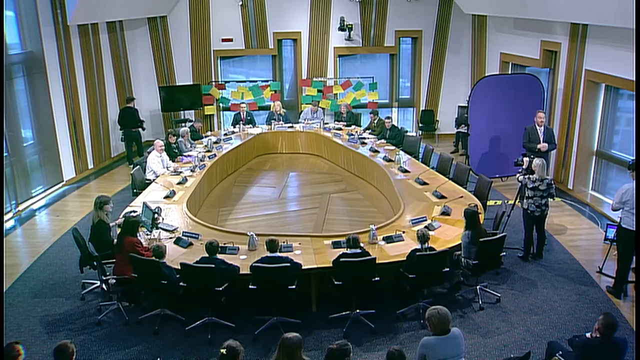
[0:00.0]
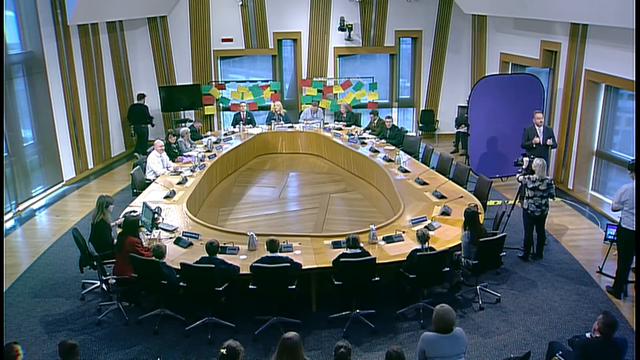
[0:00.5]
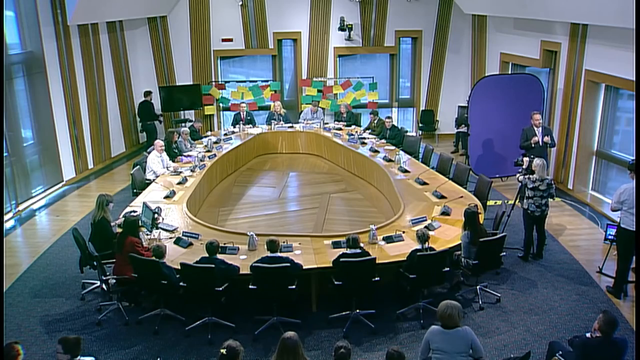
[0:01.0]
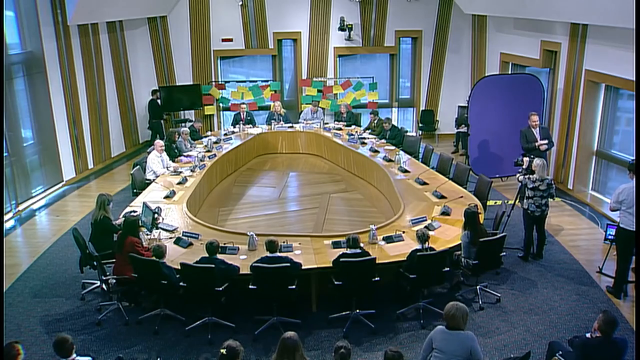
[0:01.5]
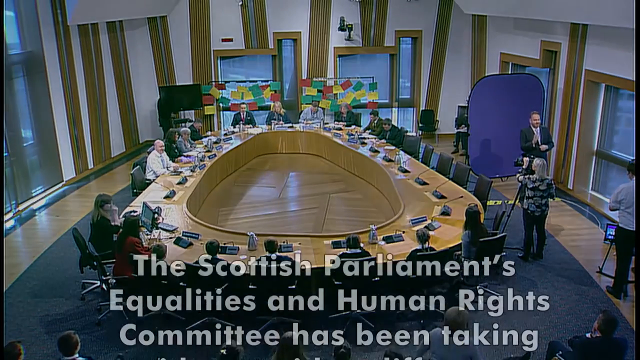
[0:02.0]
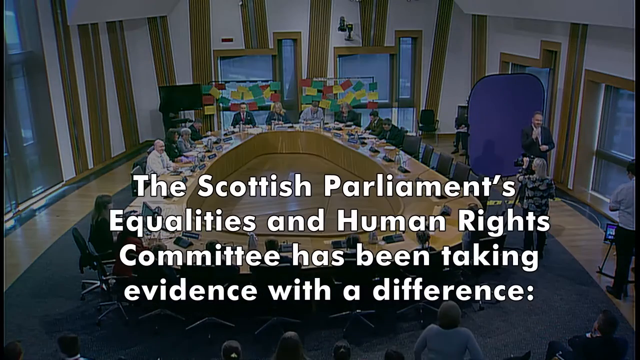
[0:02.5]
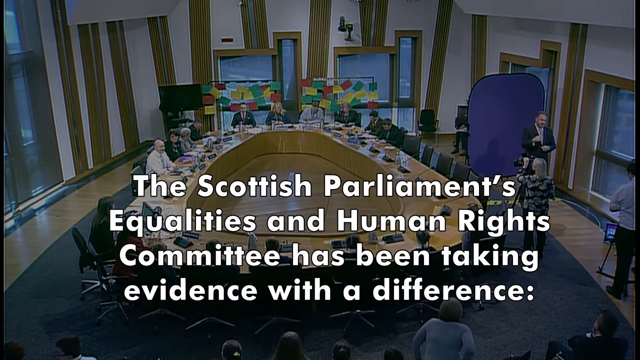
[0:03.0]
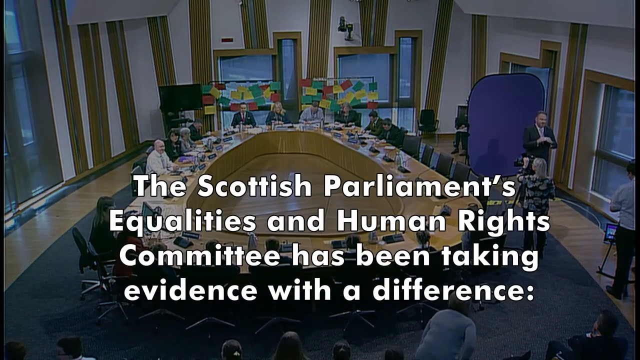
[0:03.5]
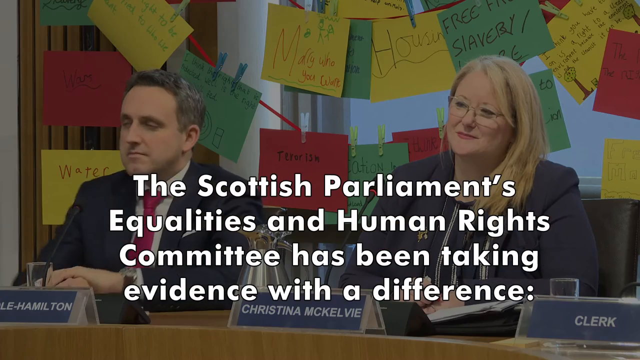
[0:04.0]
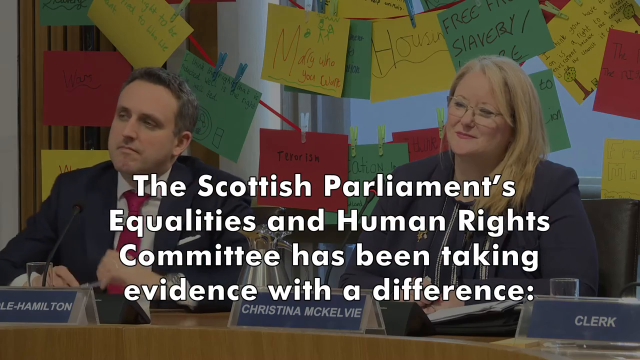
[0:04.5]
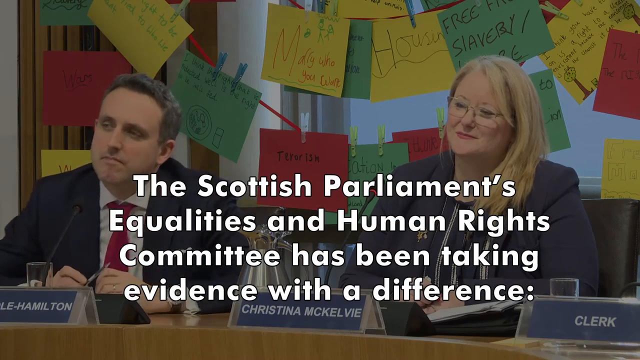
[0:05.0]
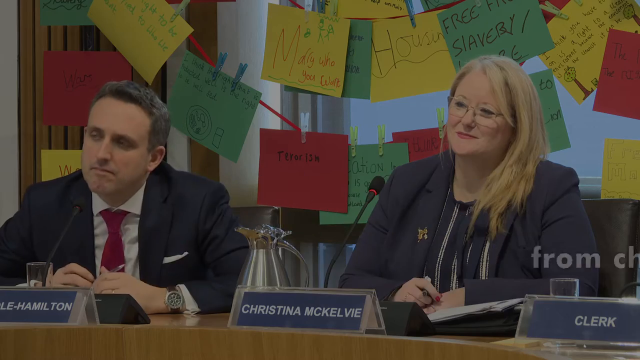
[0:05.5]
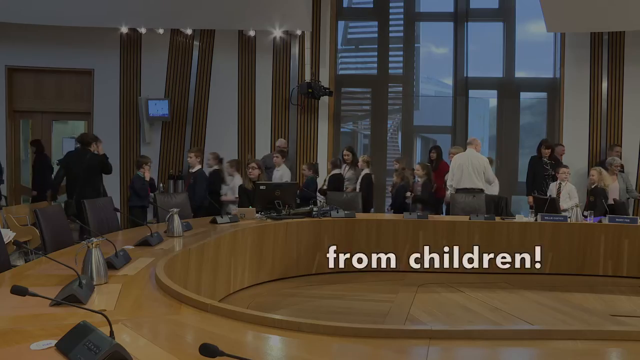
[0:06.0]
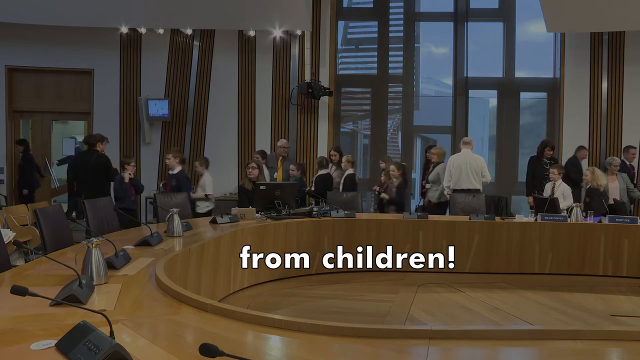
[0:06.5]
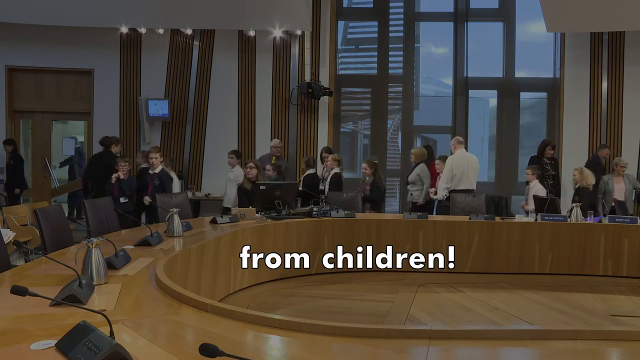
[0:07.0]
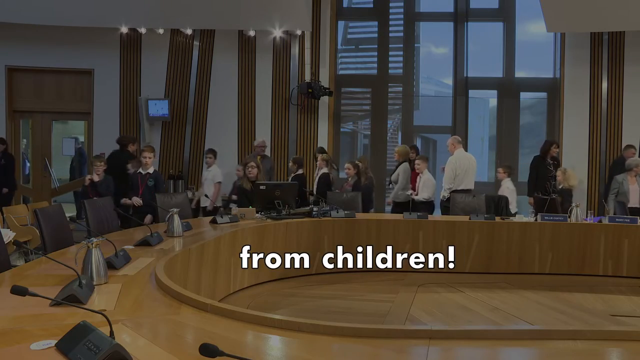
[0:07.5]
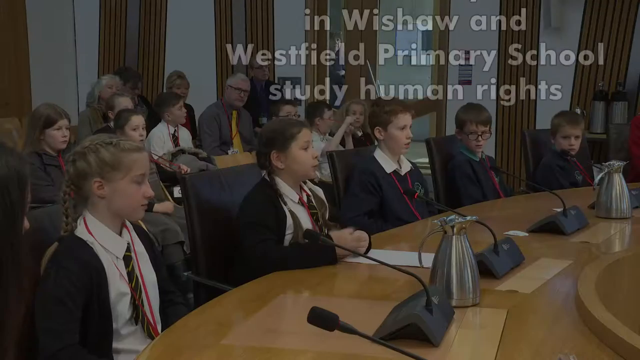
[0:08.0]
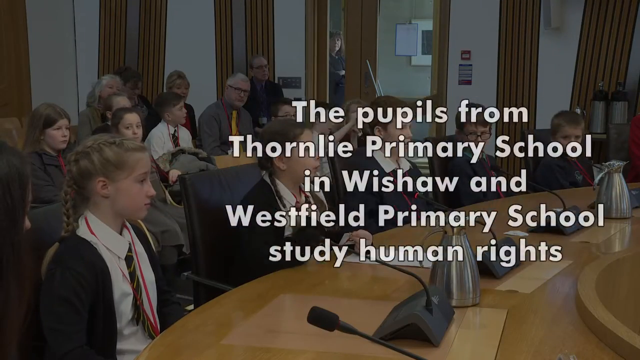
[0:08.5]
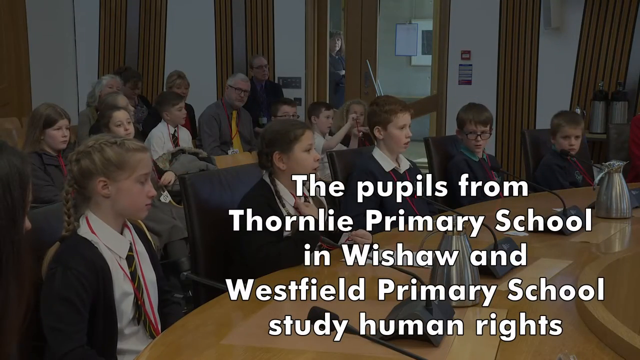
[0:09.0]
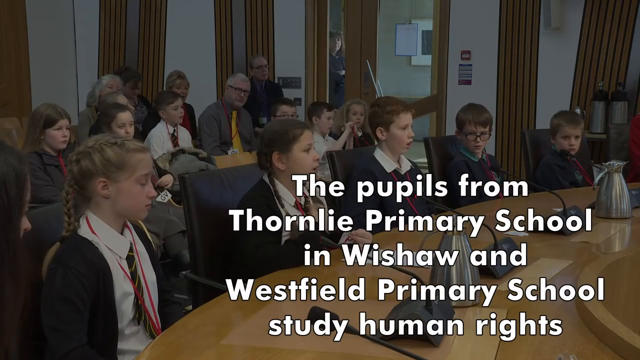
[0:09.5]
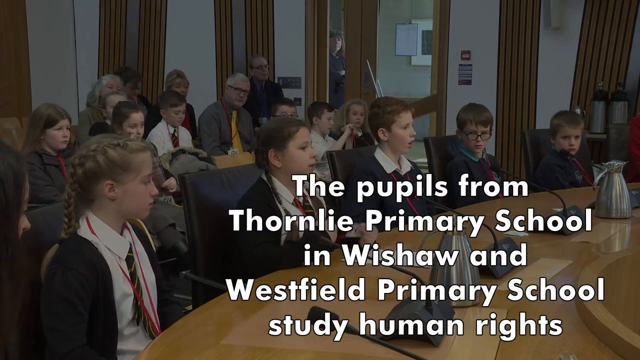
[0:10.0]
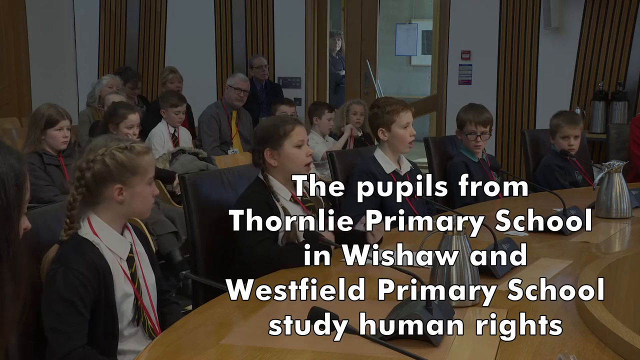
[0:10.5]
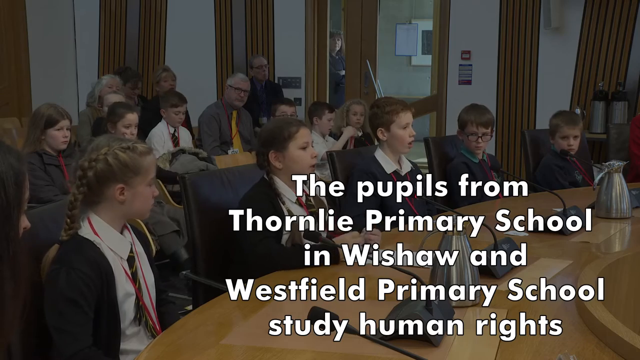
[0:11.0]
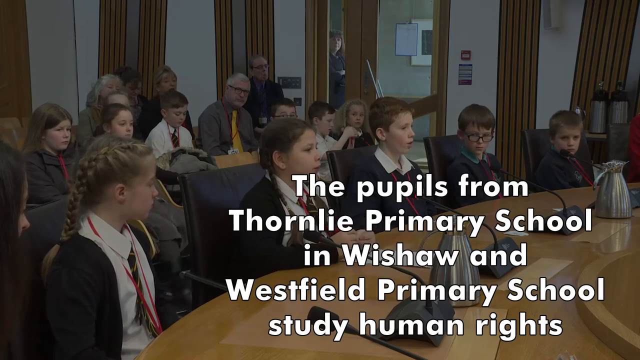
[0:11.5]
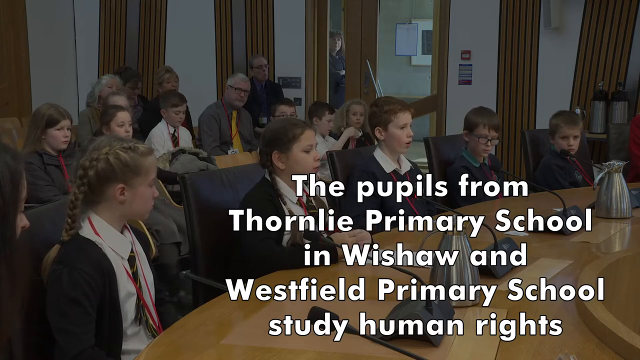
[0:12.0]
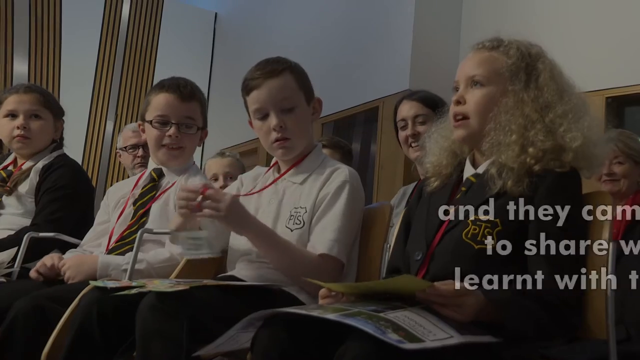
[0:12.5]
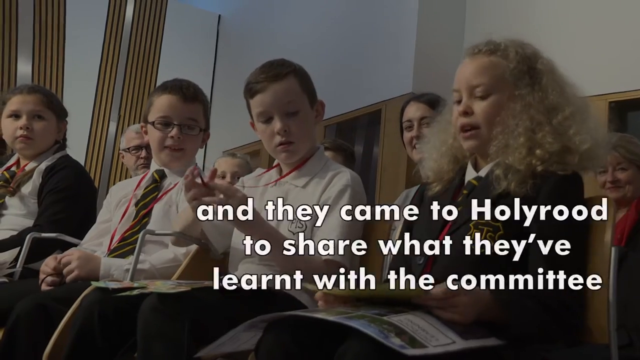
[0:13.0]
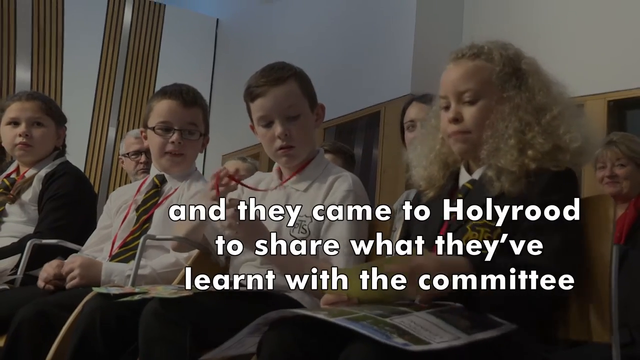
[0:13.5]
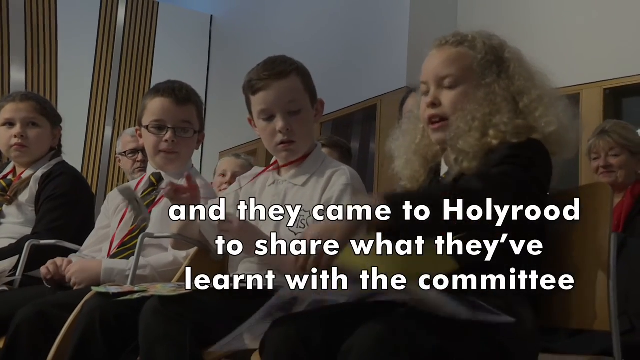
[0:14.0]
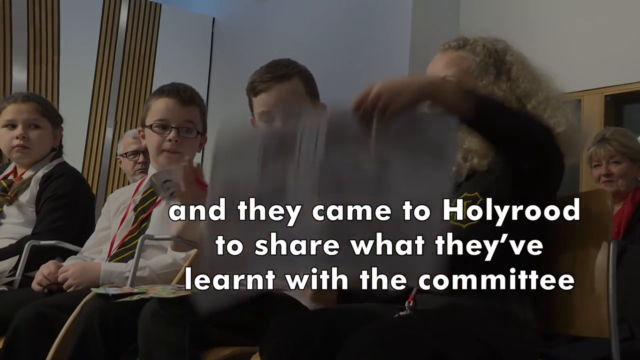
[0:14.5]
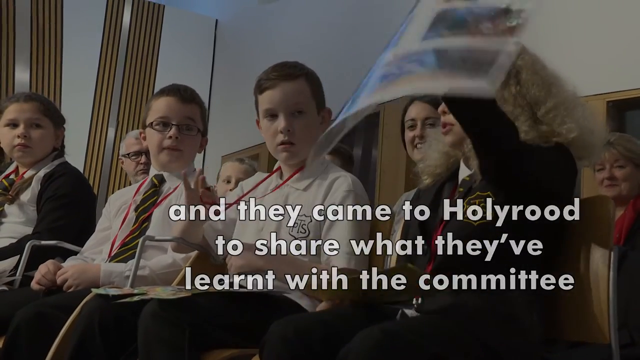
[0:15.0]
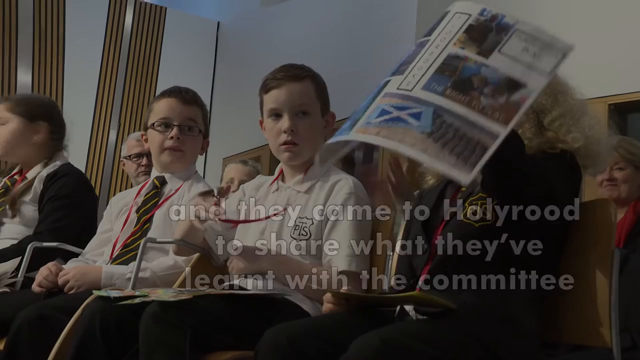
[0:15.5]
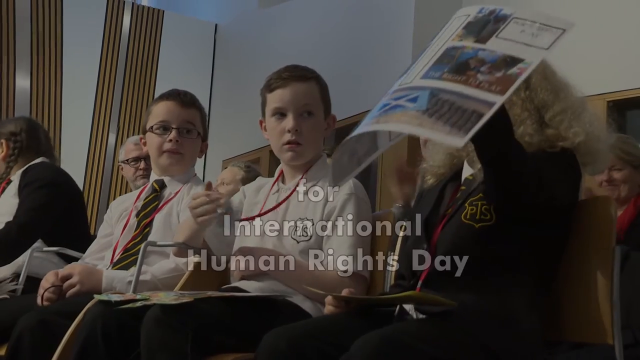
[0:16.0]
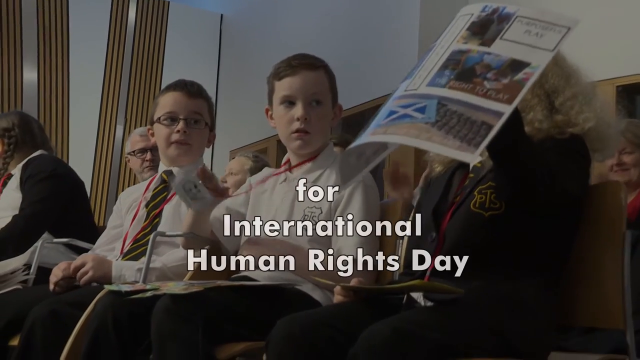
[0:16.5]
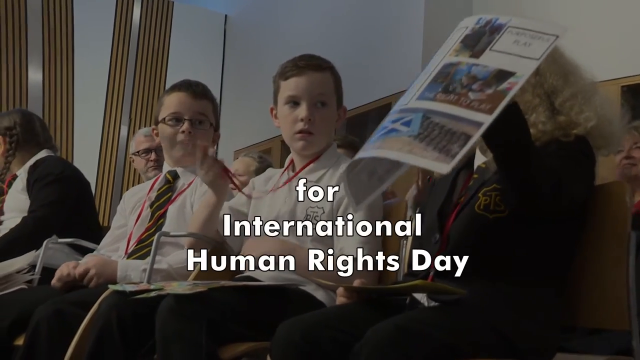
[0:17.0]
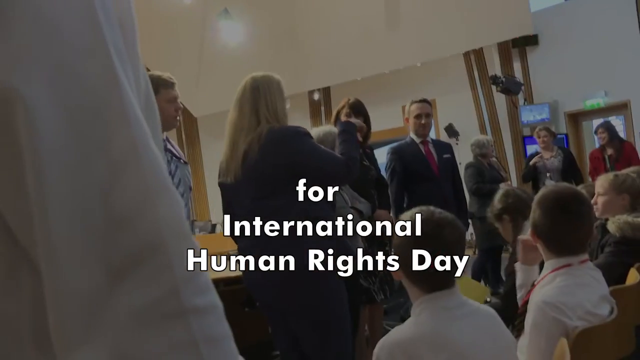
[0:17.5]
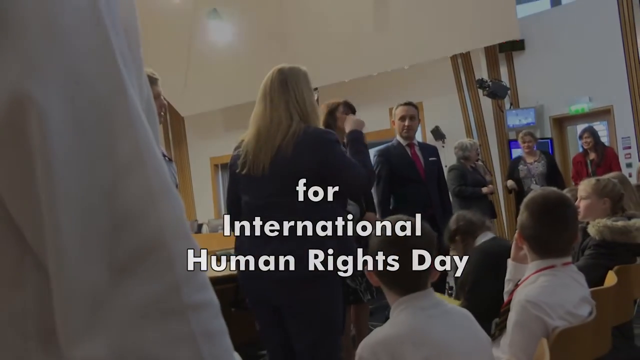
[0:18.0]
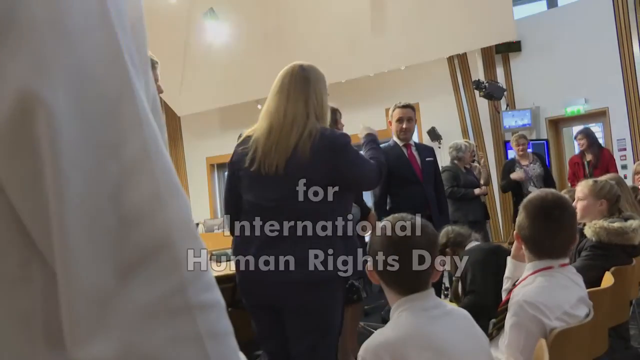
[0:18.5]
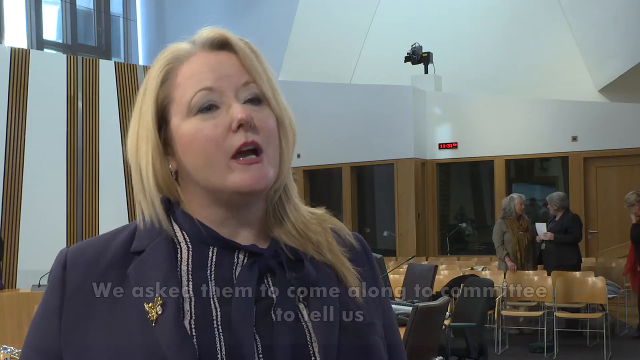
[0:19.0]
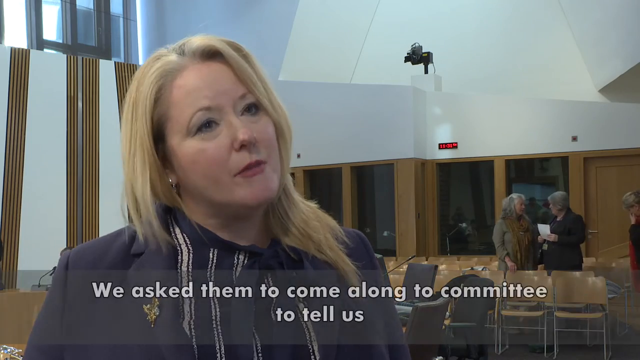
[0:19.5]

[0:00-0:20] A wide shot shows a large room with an oval-shaped desk in the center. The desk has an oval-shaped center with a wood floor, and there is a large black rug around the desk area, with a hardwood floor. The room is surrounded by windows on all sides and walls with what appear to be gold supports. Text scrolls up from the bottom of the screen reading "The Scottish Parliament's Equalities and Human Rights Committee has been taking evidence with a difference from the children". The camera zooms in and shows different views of the room: children sitting at the desk and older people sitting on the other side. More text scrolls down from the top over the background of the children, reading "the pupils from Thornley Primary School in Wishaw and Westfield Primary School study human rights". The video cuts to more children, one of them holding a newspaper, with text below reading "and they came to Holyrood to share what they've learned with the committee for International Human Rights Day". A woman is then shown being interviewed, with text at the bottom reading "we asked them to come along to committee to tell us".